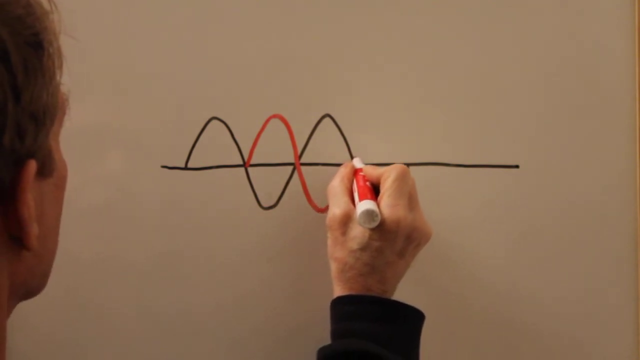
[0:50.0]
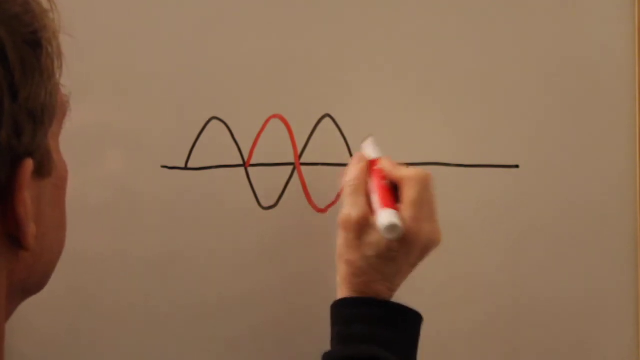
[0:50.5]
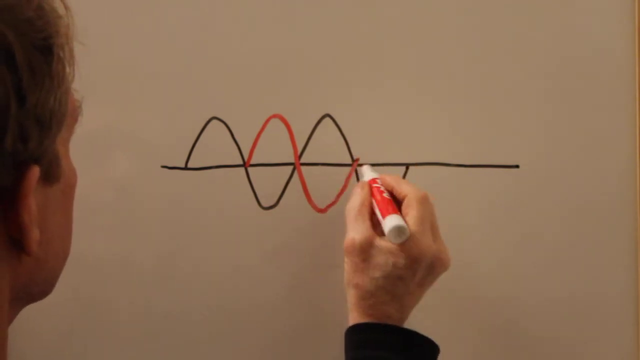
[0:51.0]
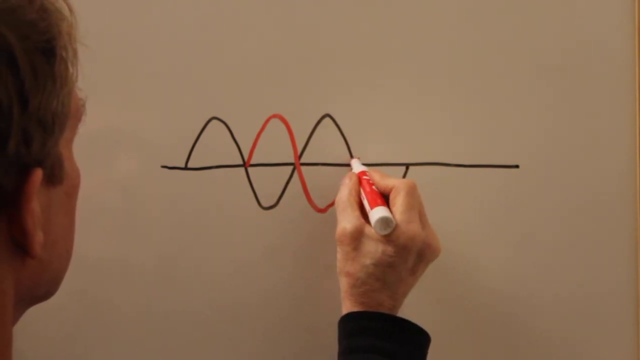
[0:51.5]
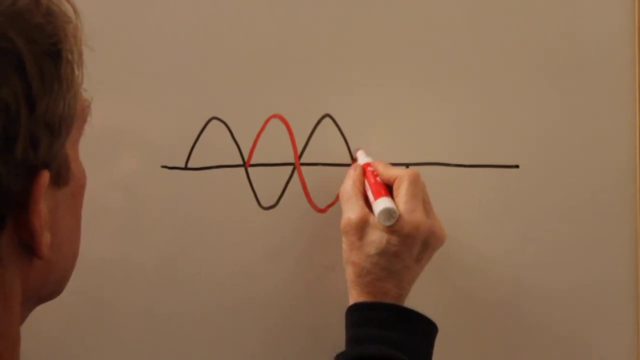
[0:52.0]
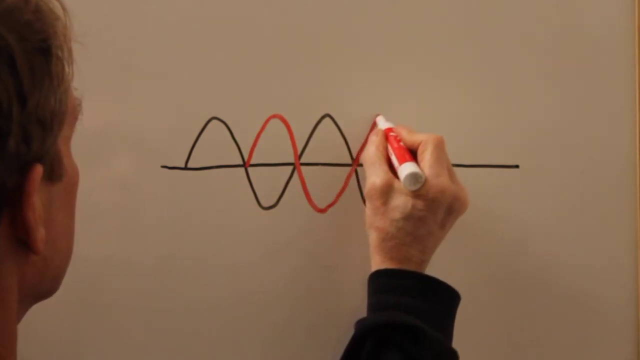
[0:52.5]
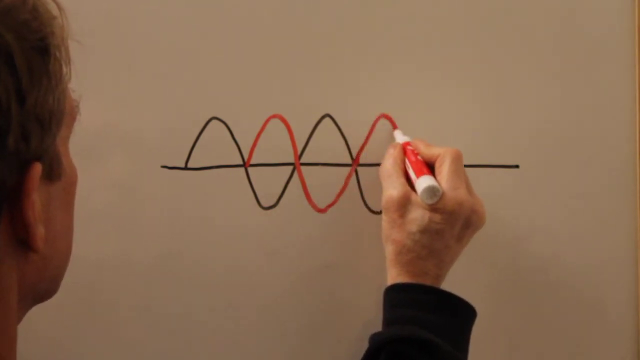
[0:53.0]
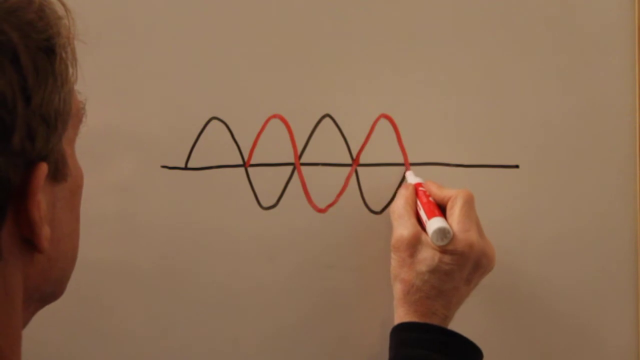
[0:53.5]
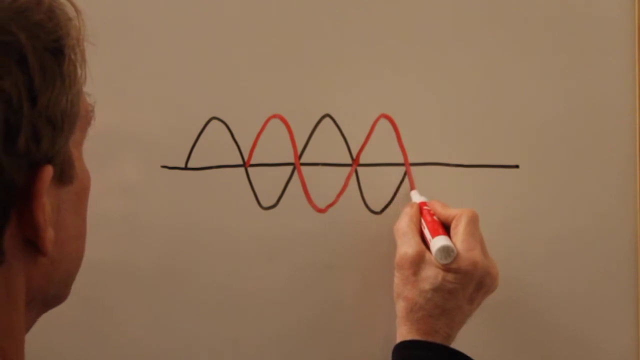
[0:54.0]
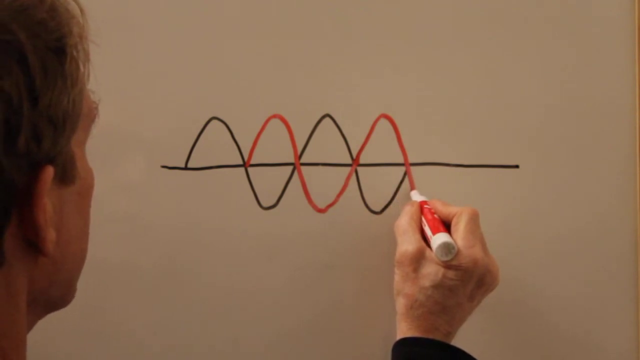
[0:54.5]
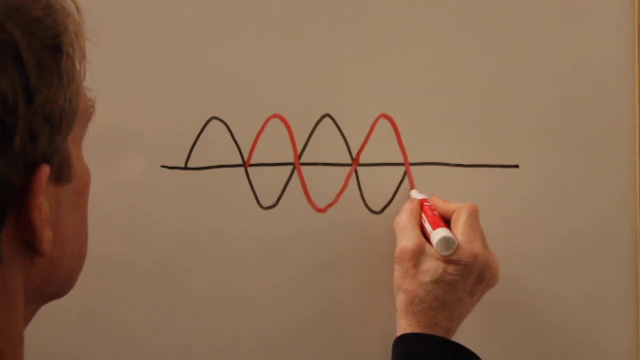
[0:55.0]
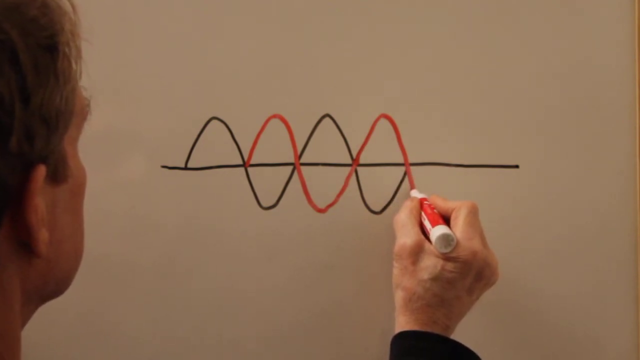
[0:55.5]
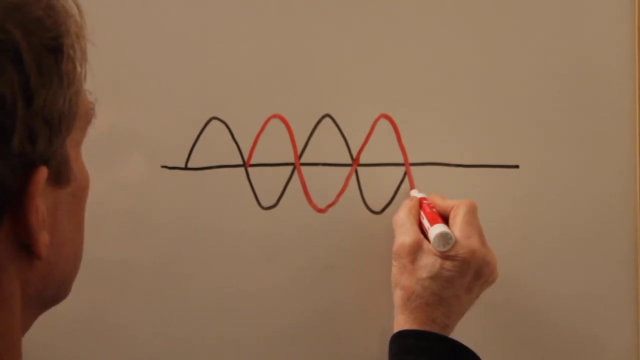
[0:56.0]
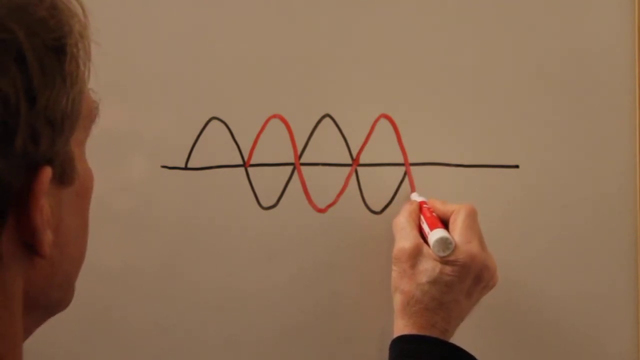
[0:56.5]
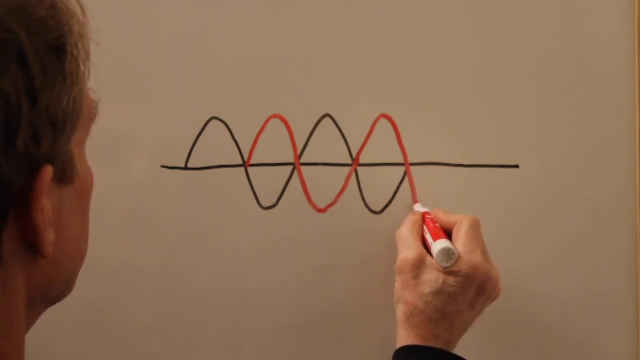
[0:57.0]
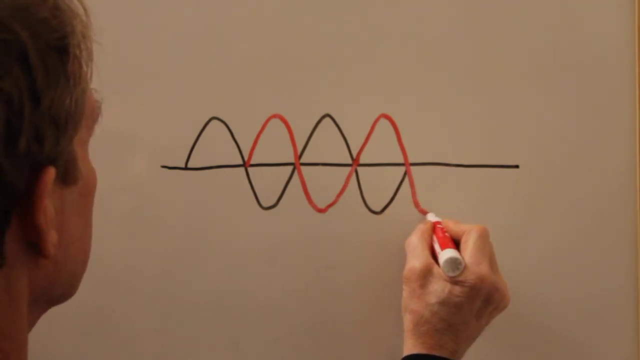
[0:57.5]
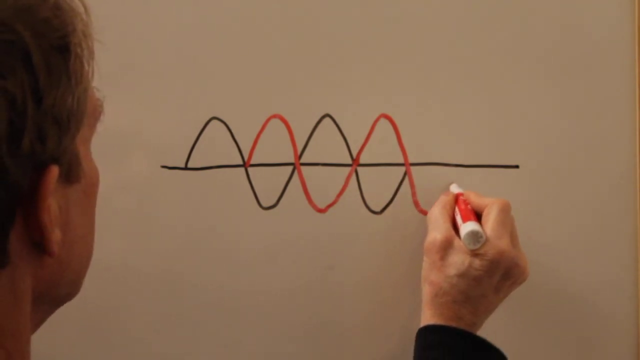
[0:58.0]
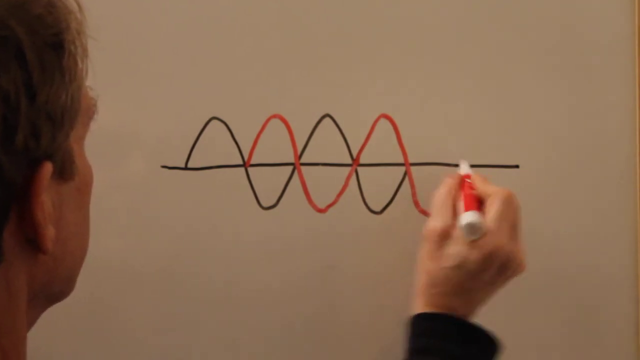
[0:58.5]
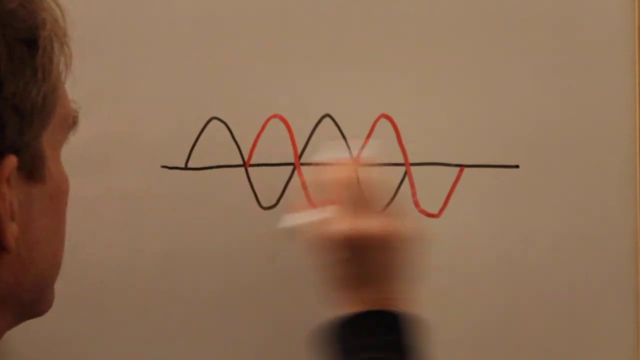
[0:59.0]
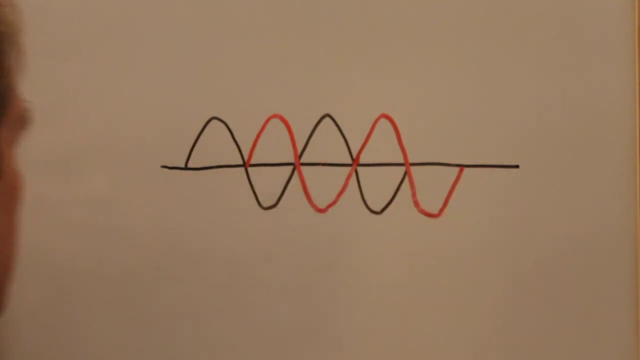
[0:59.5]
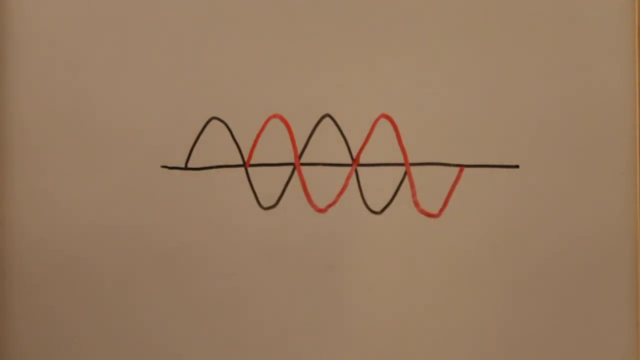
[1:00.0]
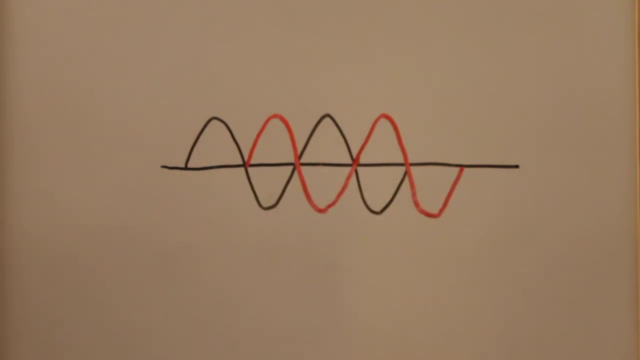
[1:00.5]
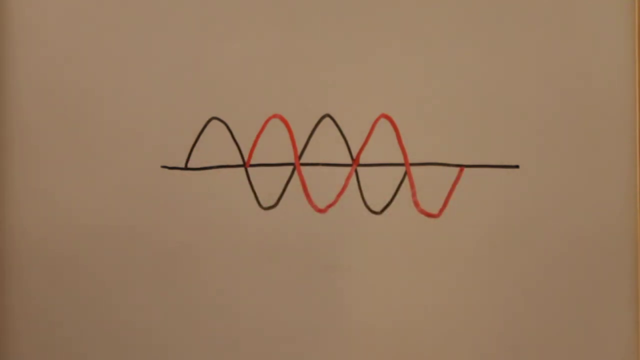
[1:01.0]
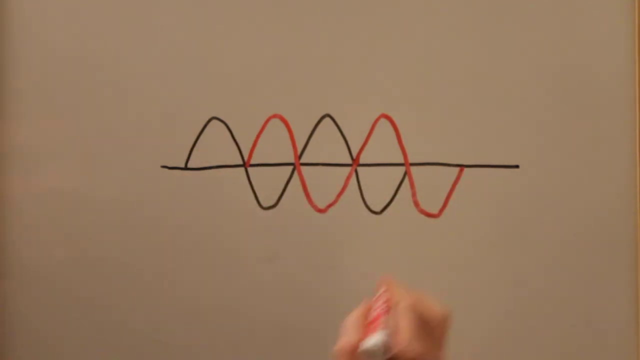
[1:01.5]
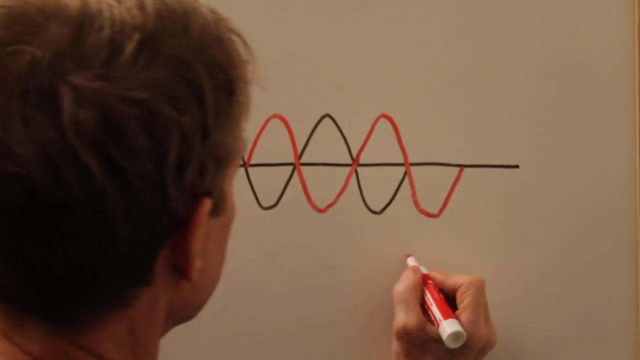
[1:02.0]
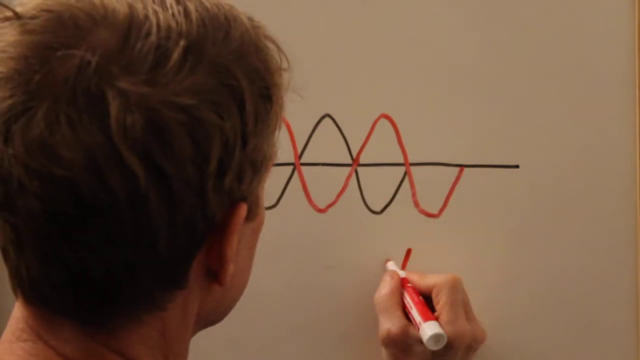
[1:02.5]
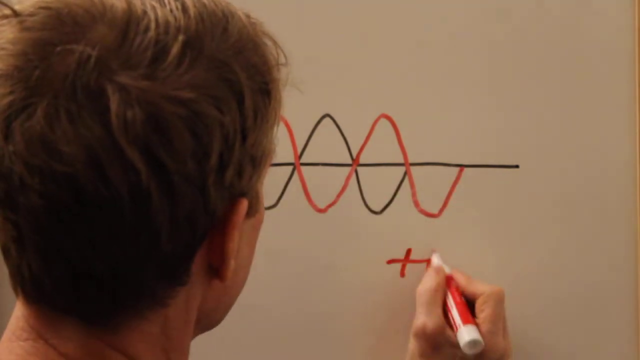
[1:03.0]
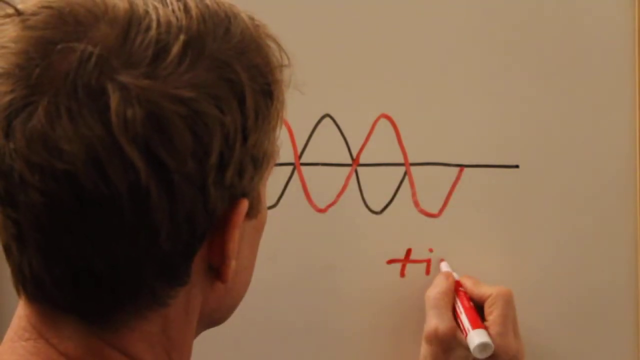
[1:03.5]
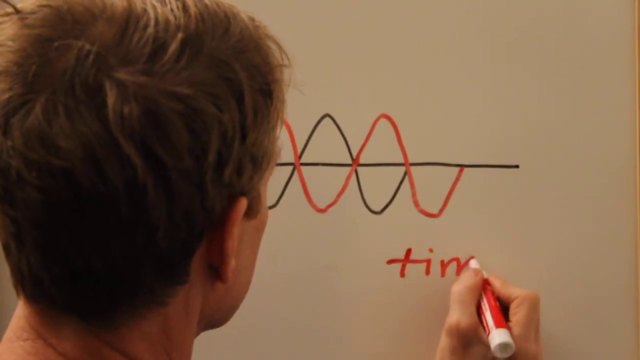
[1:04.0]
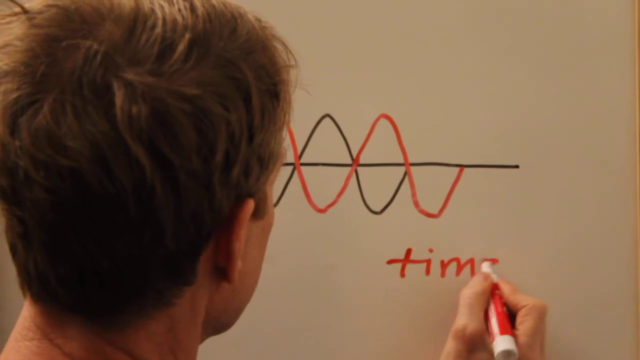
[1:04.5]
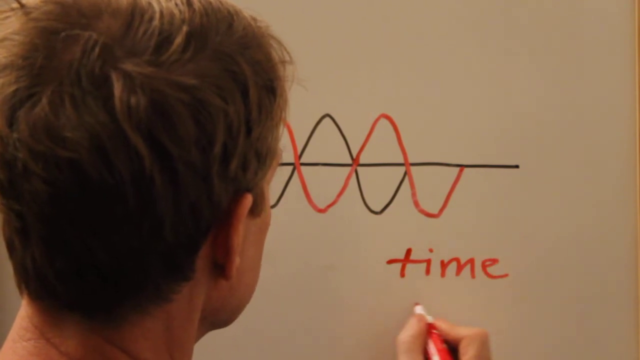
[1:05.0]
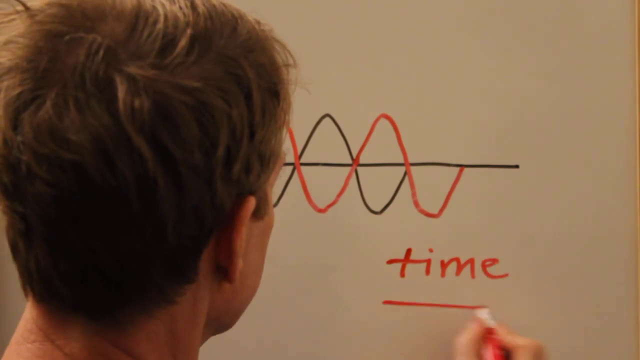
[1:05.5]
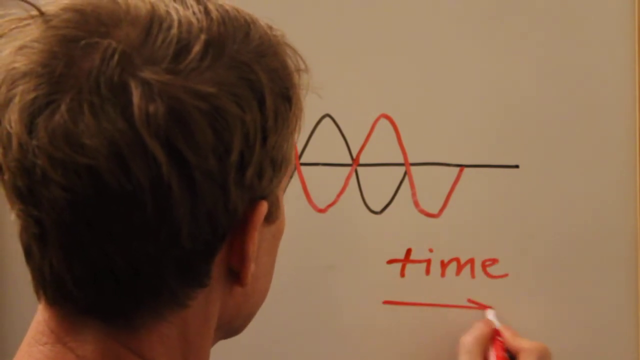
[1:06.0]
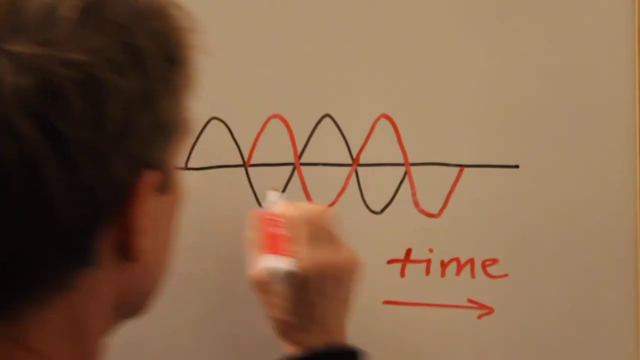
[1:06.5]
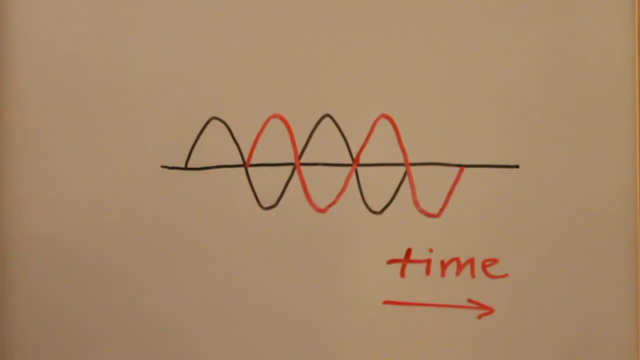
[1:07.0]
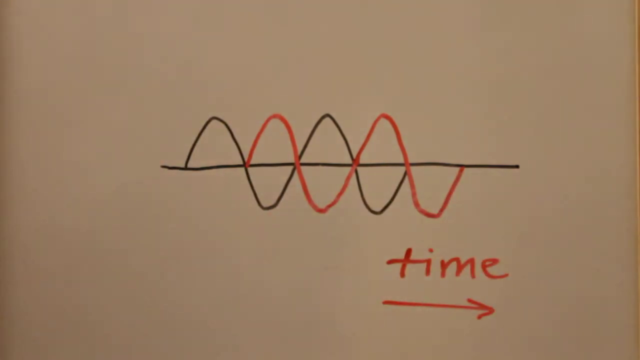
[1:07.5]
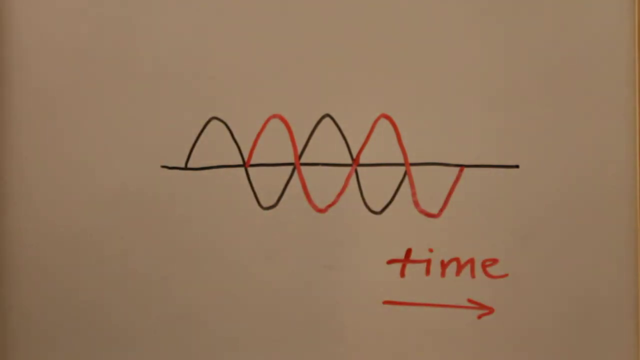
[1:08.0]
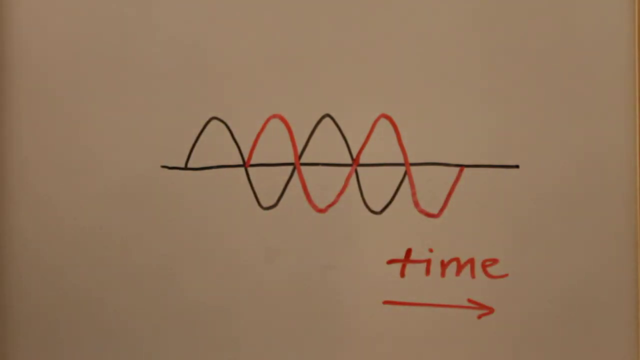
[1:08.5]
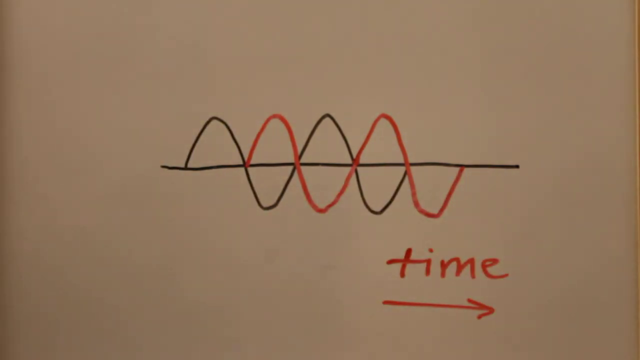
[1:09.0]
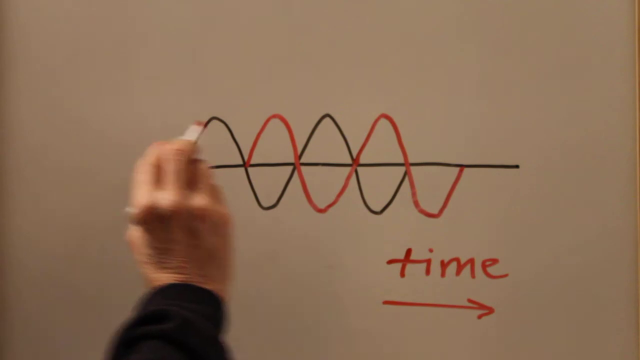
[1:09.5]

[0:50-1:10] He draws the second red hump, which goes up high above the horizontal line, and finishes with a lower hump that meets the black line and does not go above it, so there are two humps above the horizontal line and two red humps below it. His jaw keeps moving as he continues to talk. He hesitates a little before the last hump beneath the line. After completing it he steps out of frame, then steps back in and writes "time" in lowercase letters at the bottom right, beneath the drawing, underlining it with a line that becomes an arrow pointing to the right. When he is done he gestures with his pen across the entire drawing and steps out of frame.